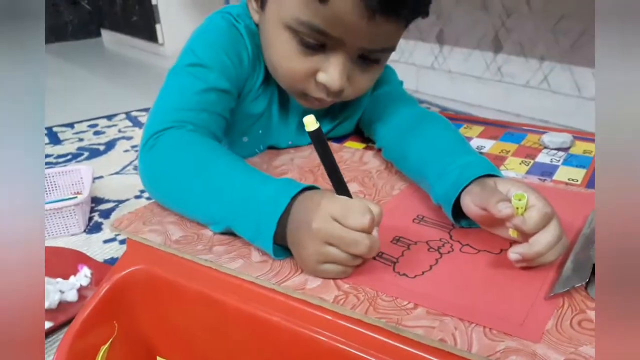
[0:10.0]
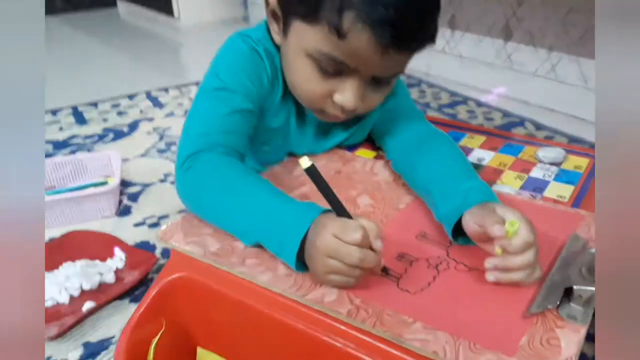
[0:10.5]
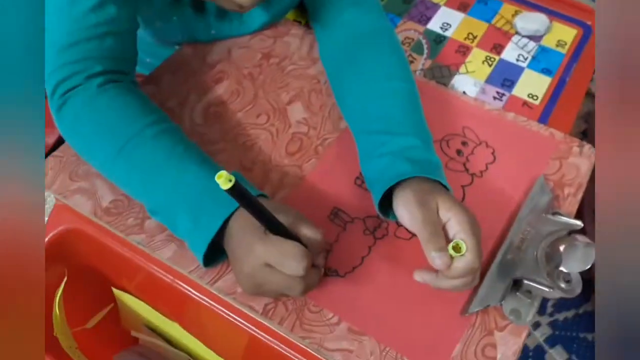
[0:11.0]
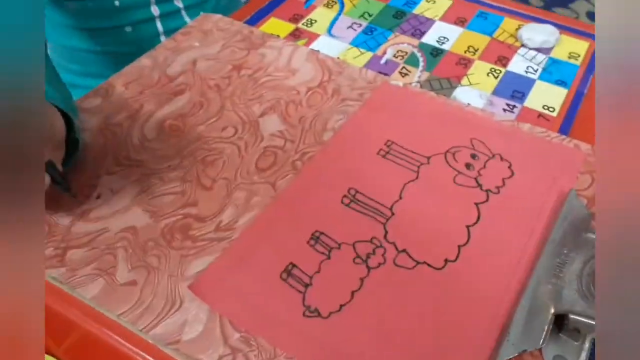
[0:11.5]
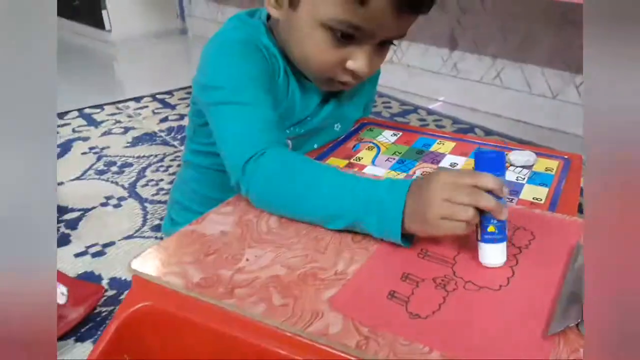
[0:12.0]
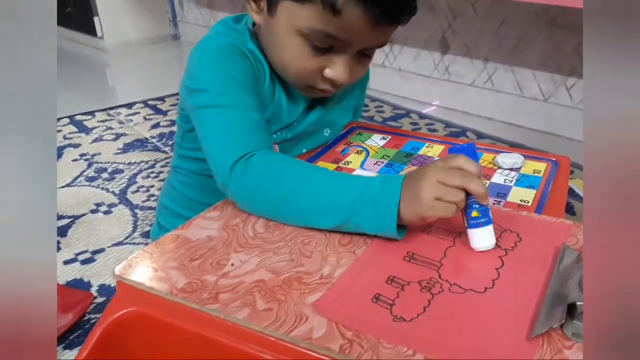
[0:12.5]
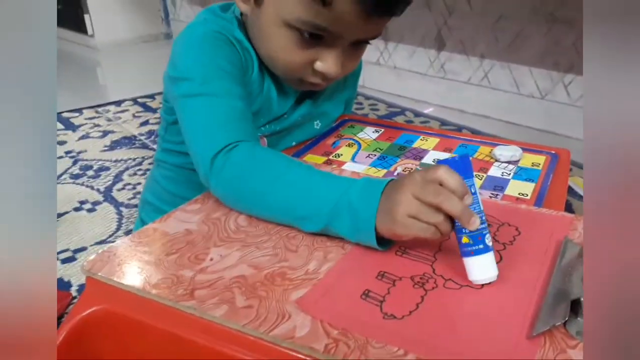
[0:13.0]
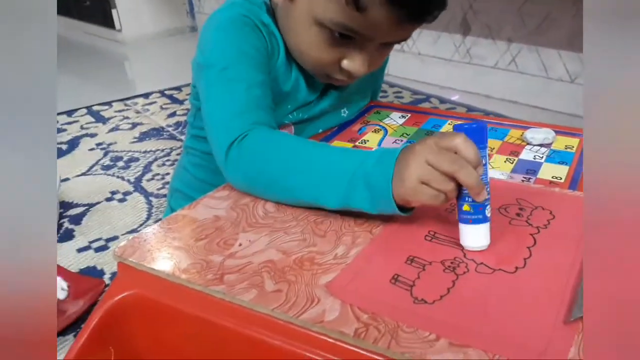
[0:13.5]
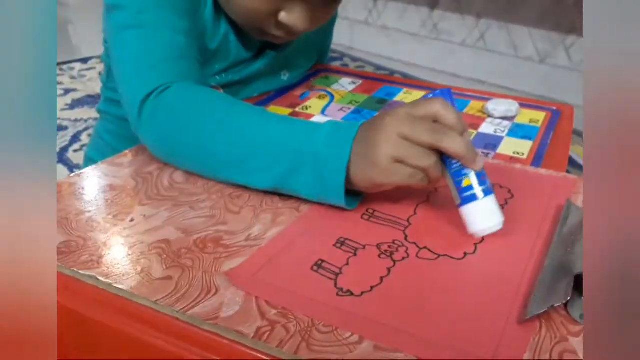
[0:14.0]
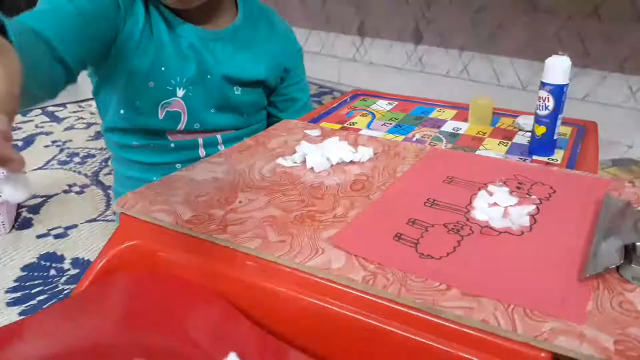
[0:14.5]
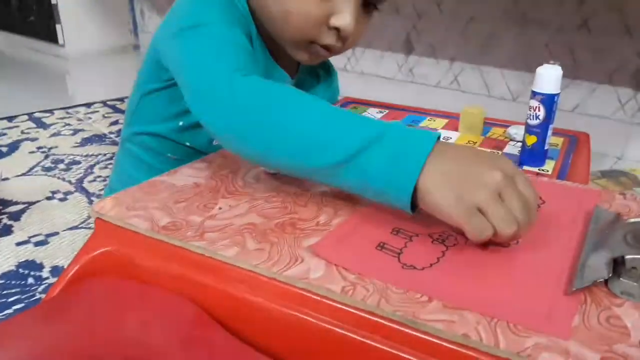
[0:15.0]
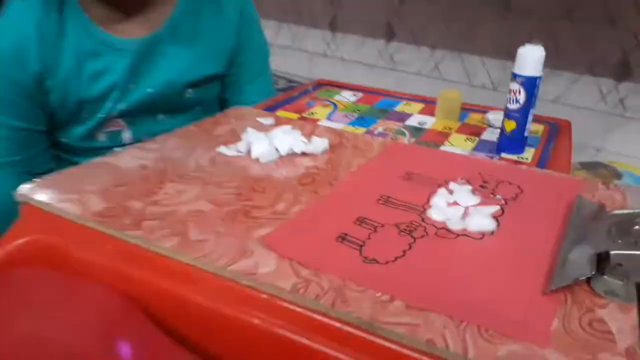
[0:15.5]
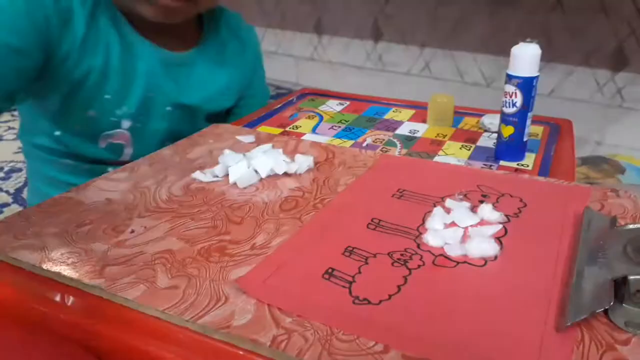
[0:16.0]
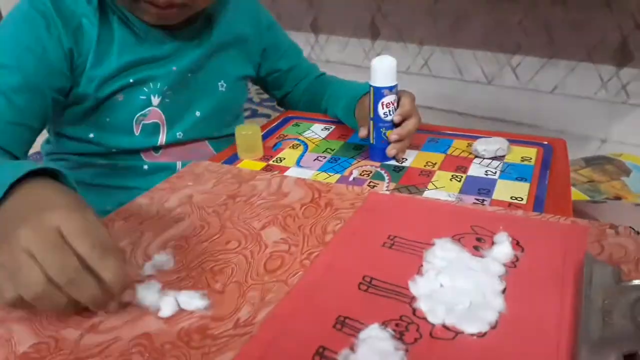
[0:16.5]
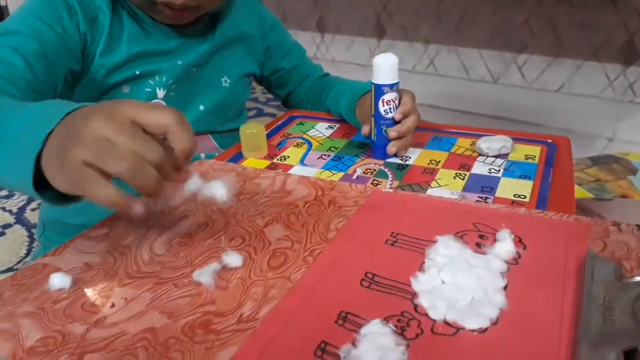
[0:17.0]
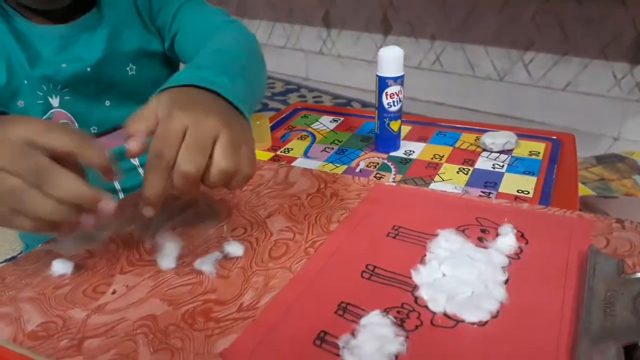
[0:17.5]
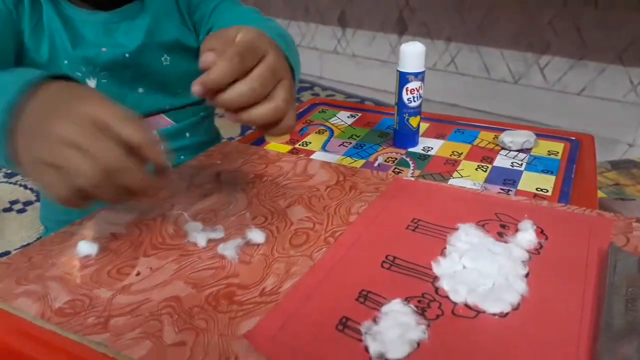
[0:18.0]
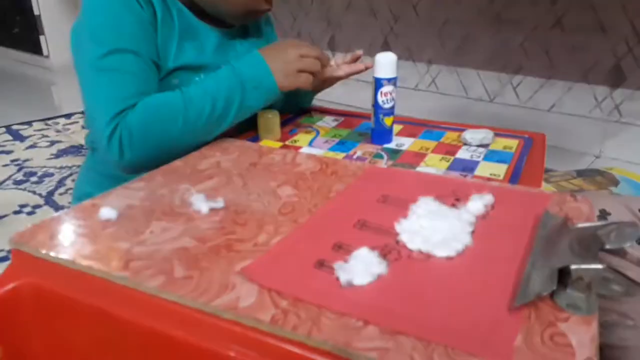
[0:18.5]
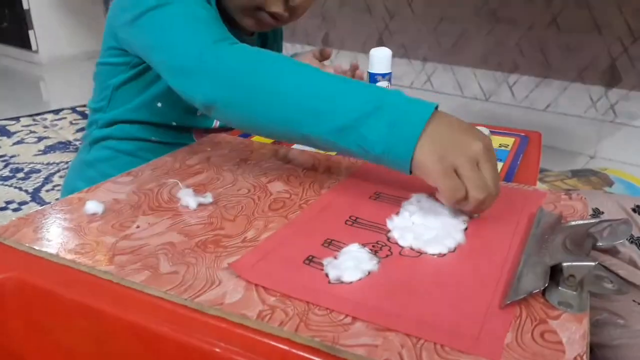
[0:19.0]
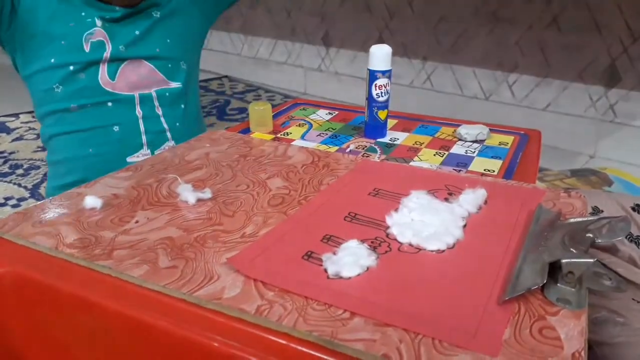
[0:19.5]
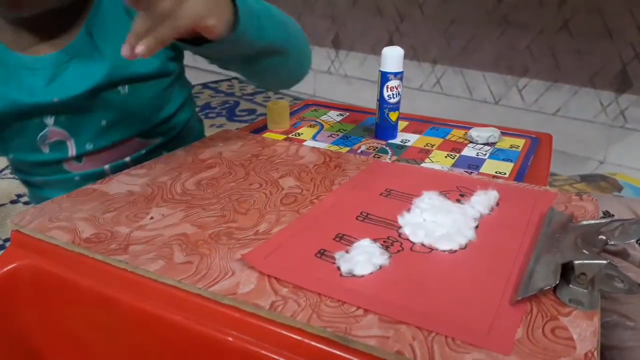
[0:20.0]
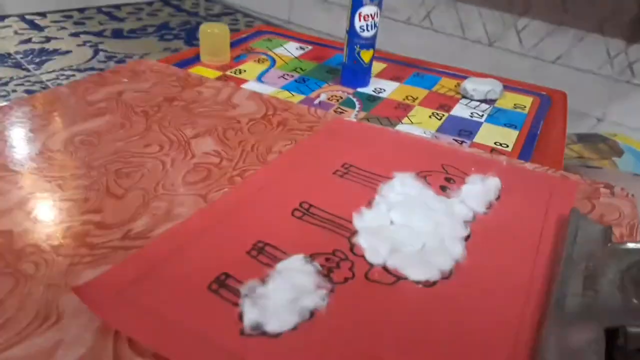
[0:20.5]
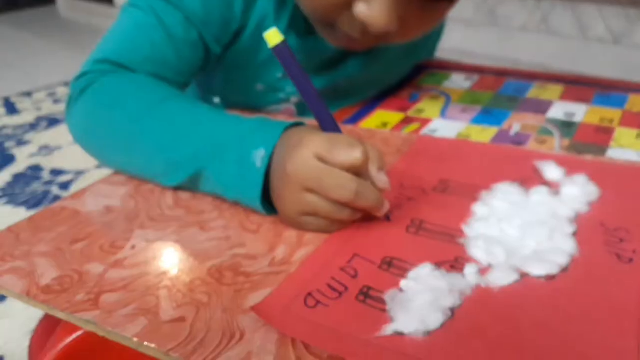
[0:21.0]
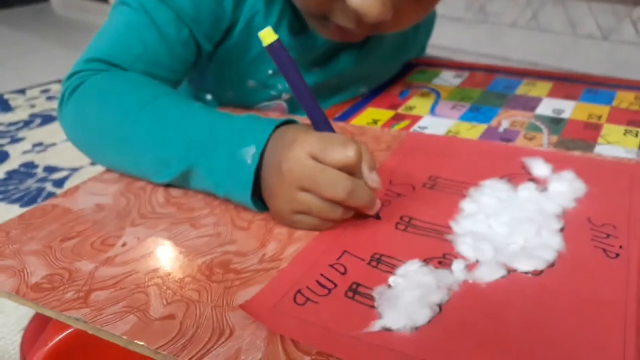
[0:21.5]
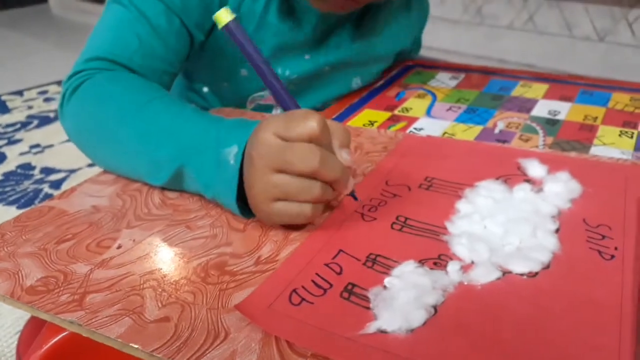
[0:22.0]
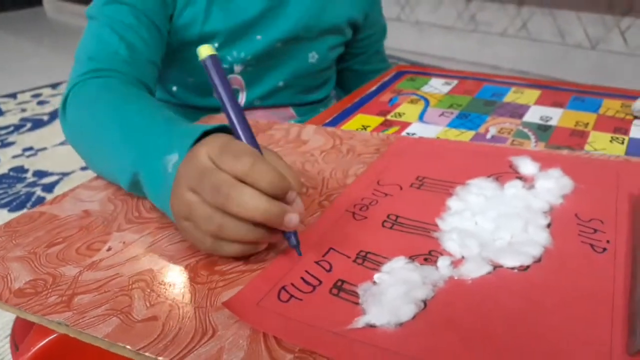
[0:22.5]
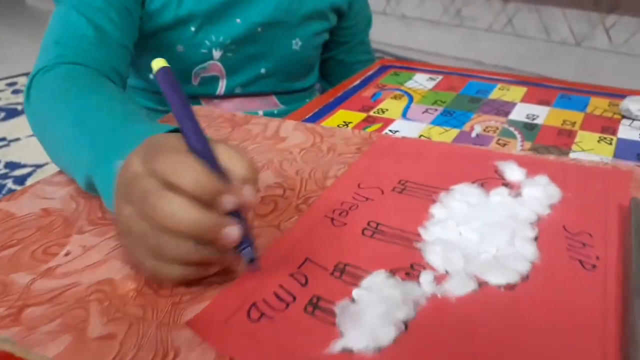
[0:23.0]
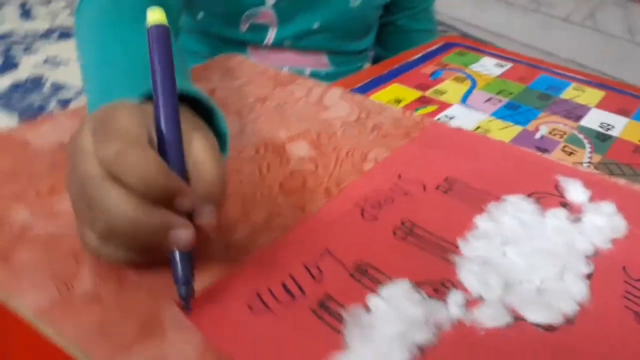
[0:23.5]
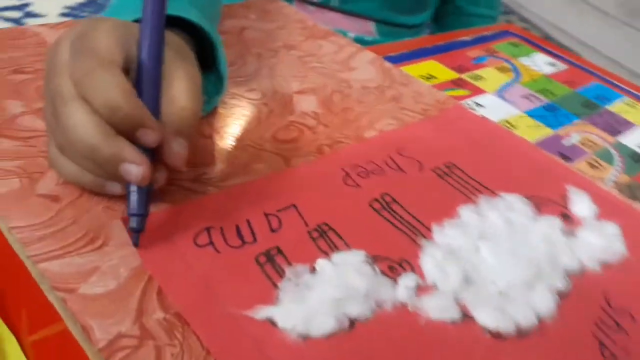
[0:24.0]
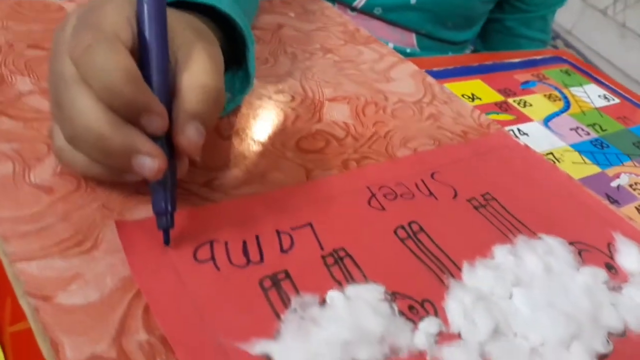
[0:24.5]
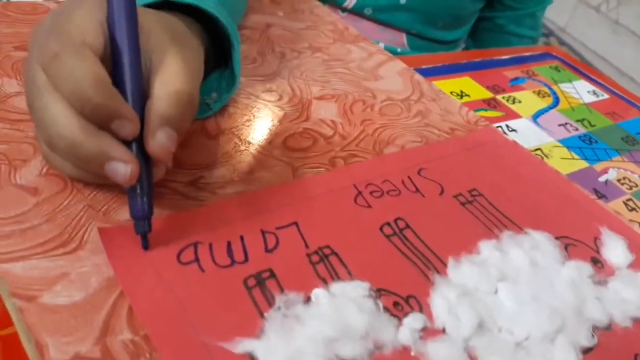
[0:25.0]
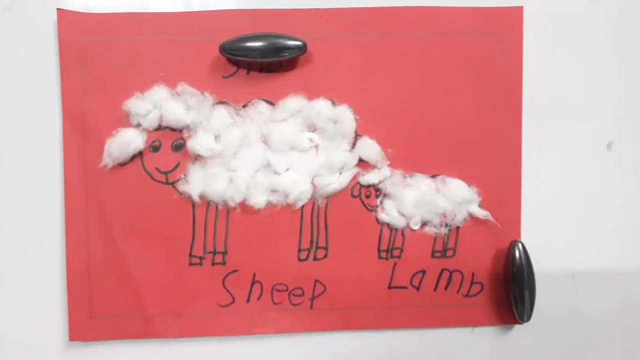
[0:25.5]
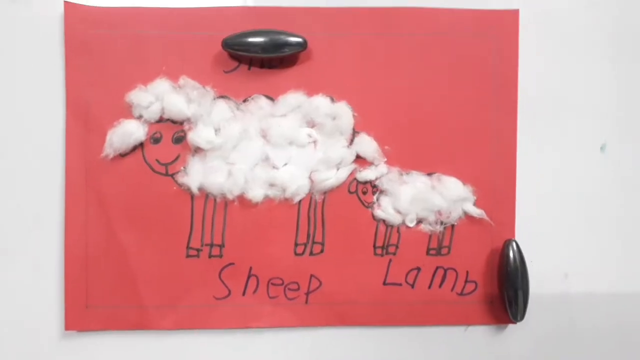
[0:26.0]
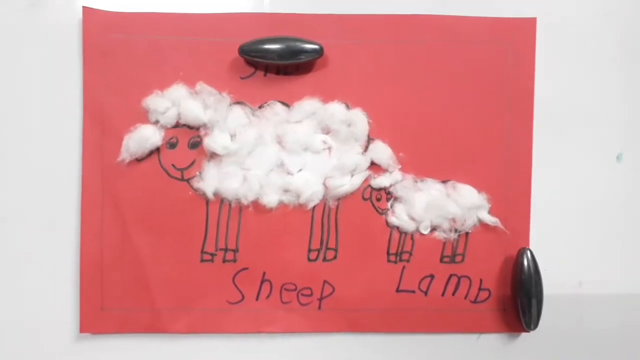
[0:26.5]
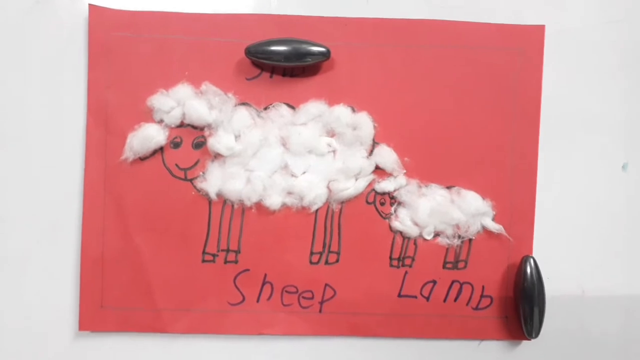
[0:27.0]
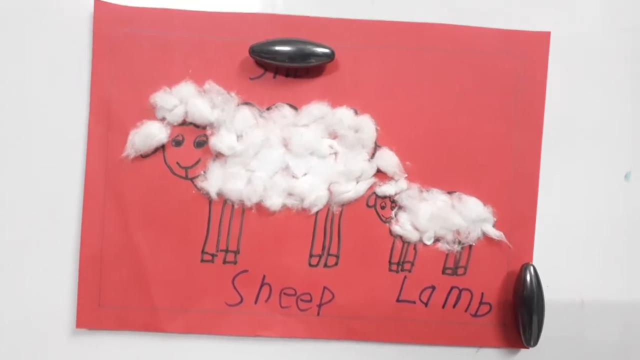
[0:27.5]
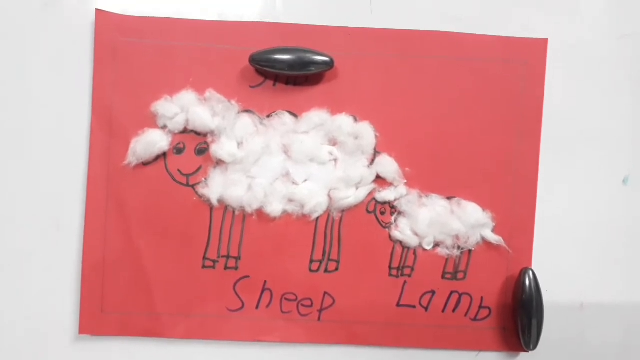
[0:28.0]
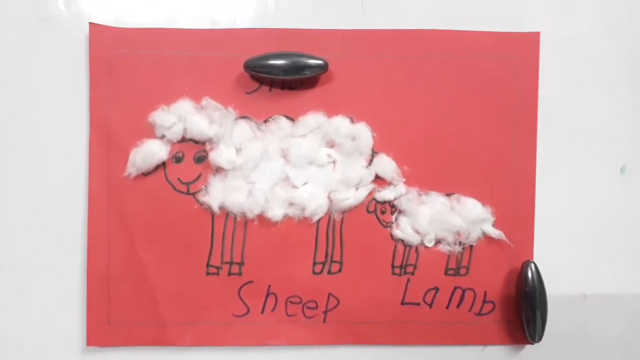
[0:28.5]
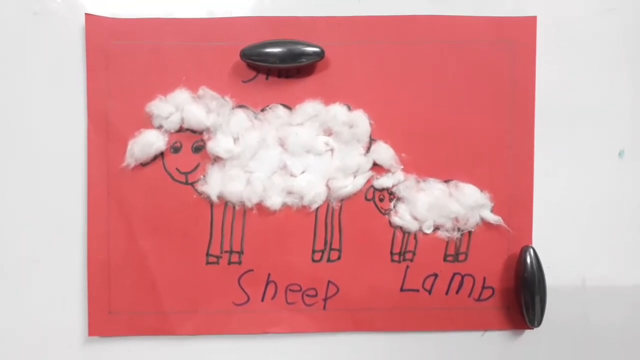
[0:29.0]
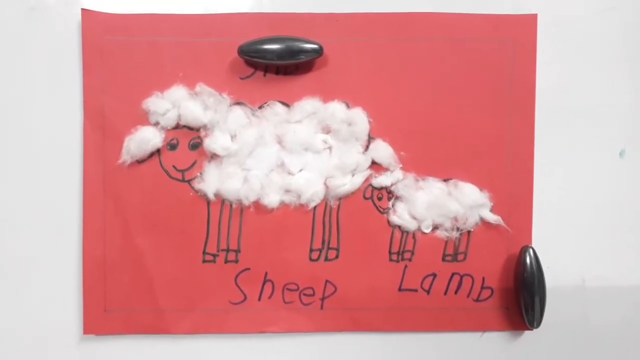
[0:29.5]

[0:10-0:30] In the time-lapse, the boy finishes his drawings of the two sheep; the one on the left is larger than the one on the right. Once he finishes the drawing, he takes out a blue glue stick, glues the bodies of the two animals, and covers them in the white, cotton-ball-like substance that was on the red plate behind him. He writes the words "sheep" and "lamb" underneath the animals. The video ends with a different point of view of the drawing of the sheep and lamb hung up on some wall or magnetized surface with two circular magnets. The word "sheep" is written at the top of the sheep and is now covered by a magnet. The magnets are black and shiny.